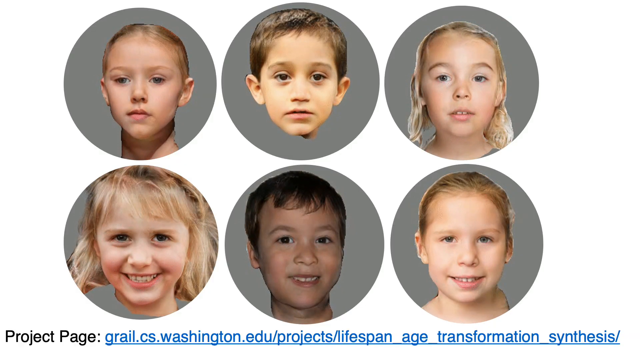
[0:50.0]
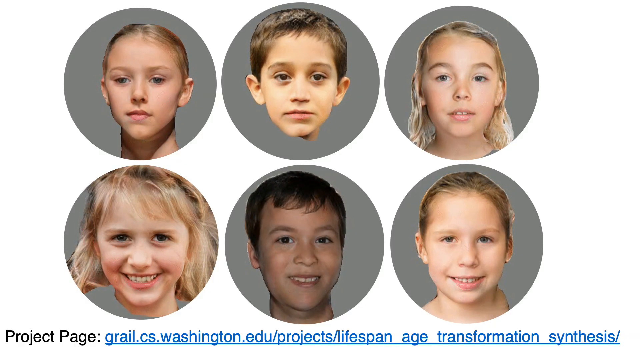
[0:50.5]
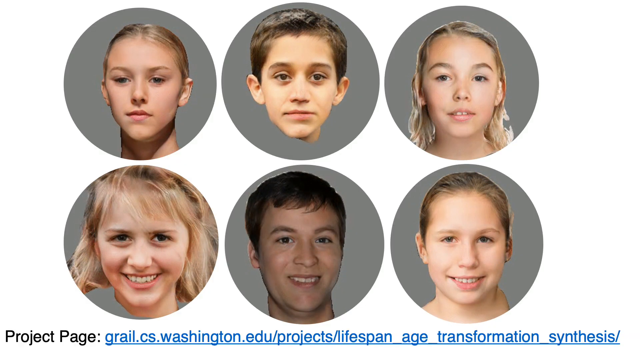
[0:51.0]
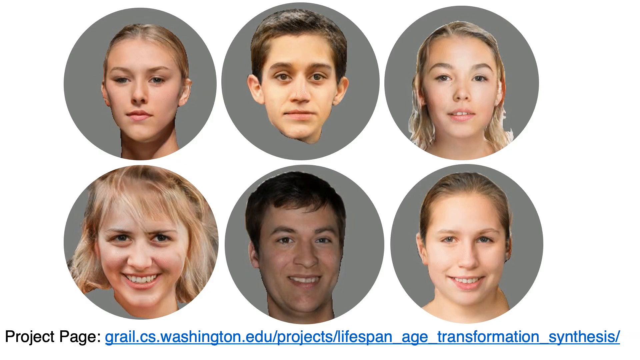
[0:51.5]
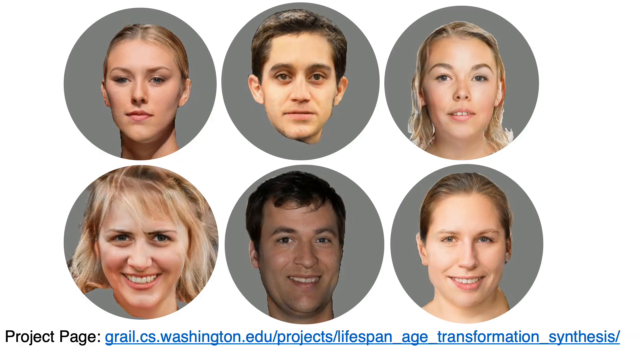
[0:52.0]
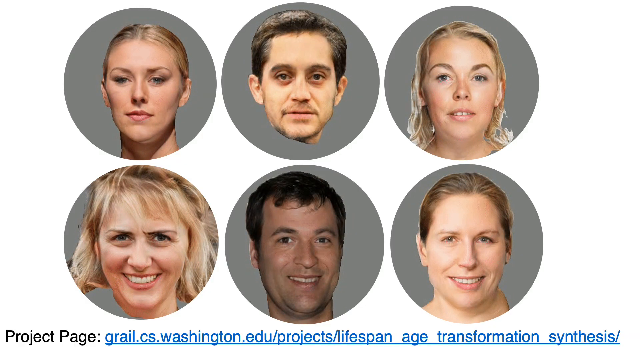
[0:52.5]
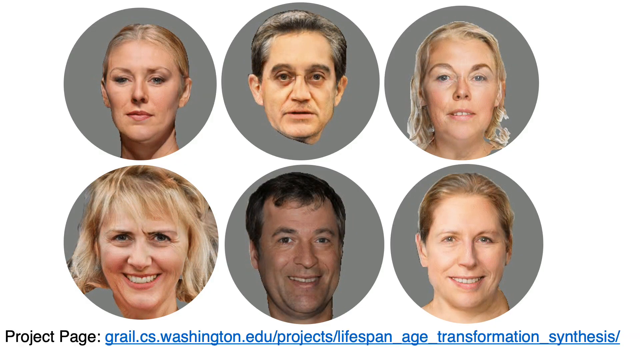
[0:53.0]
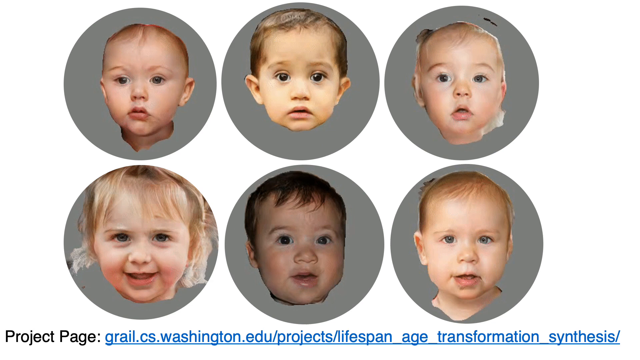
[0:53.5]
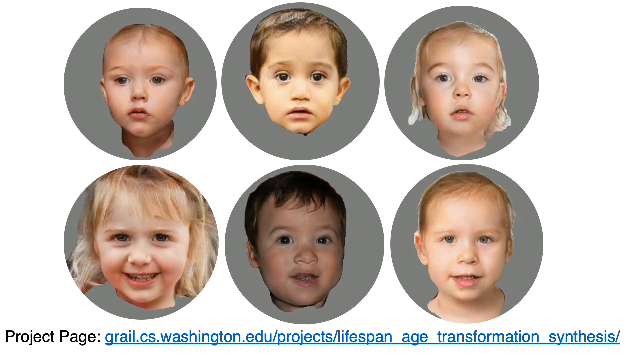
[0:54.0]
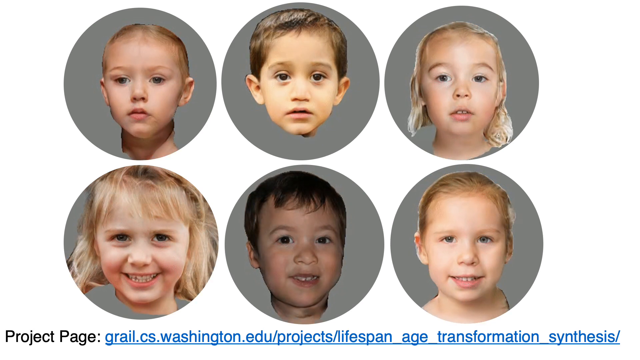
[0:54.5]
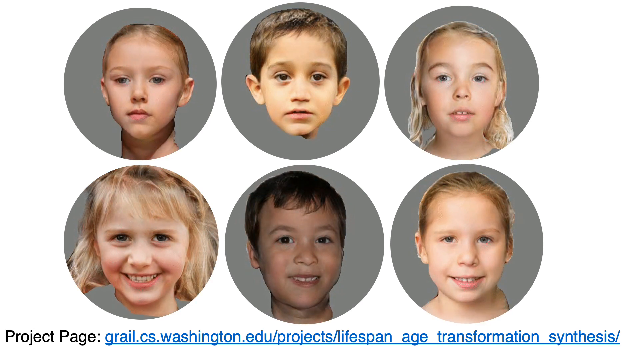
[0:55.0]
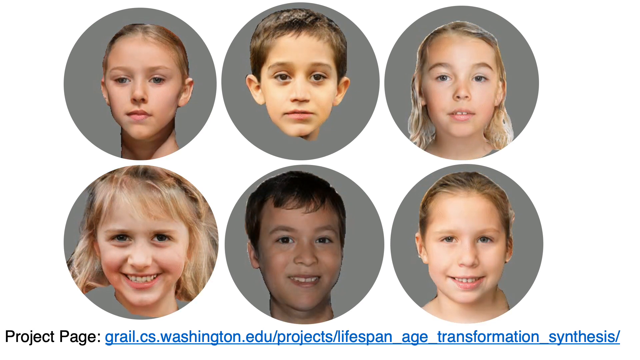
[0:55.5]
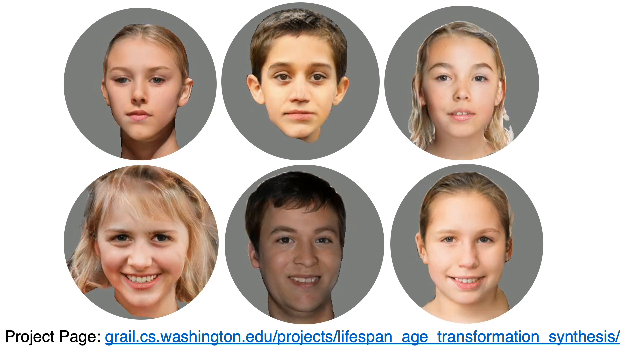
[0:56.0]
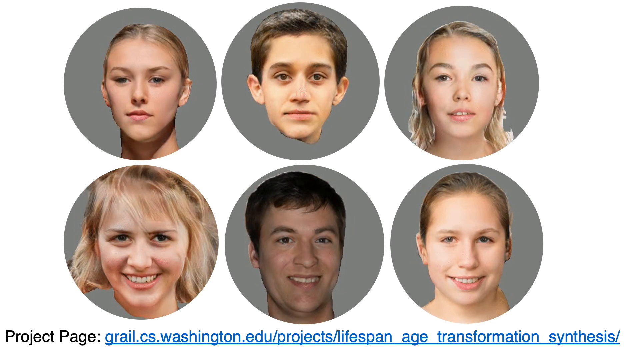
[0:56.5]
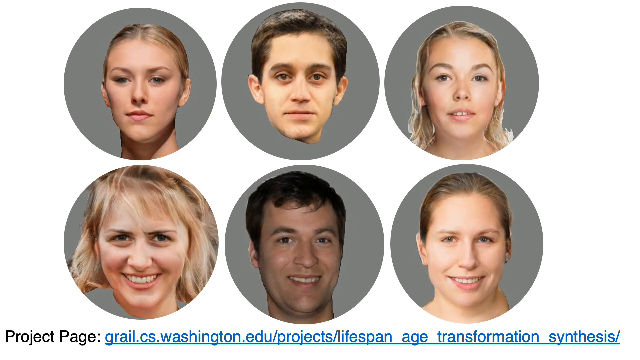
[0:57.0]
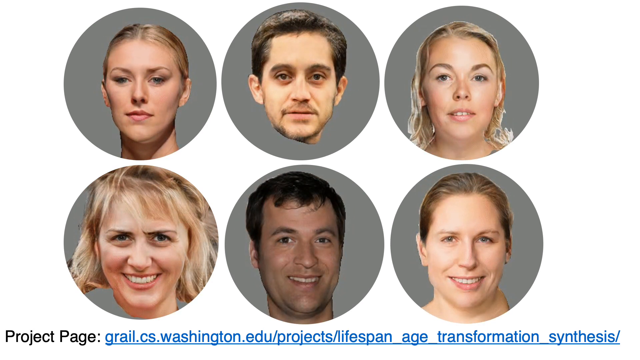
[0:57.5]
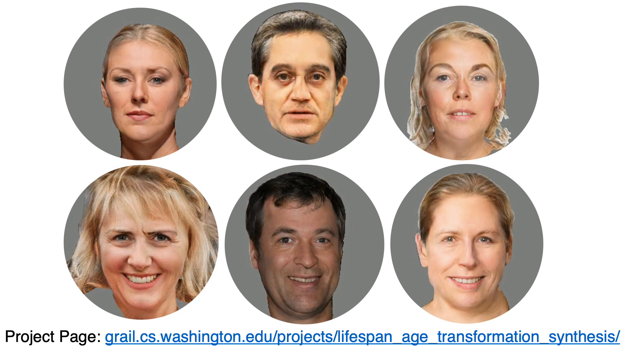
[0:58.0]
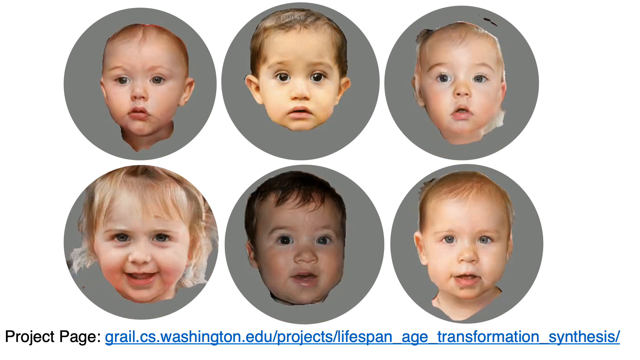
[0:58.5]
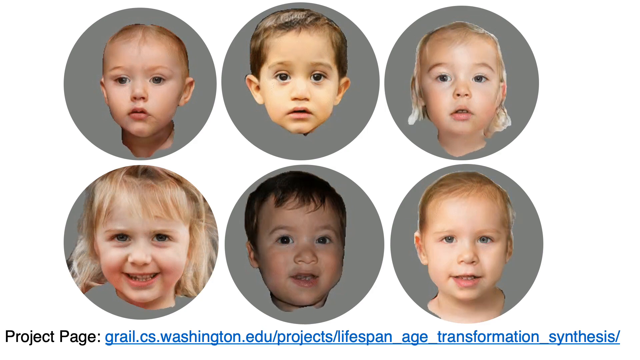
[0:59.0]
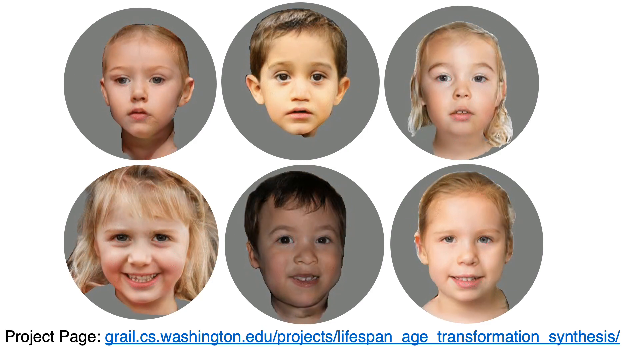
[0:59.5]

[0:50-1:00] Six gray circles are shown, three containing images of little boys and three containing images of little girls. The images slowly transform with age progression, going from very young to very old, adding wrinkles and crow's feet, changing the teeth and smiles, lengthening hair and changing different features of the face while keeping the main structure of the face. The age progression repeats about four or five times.